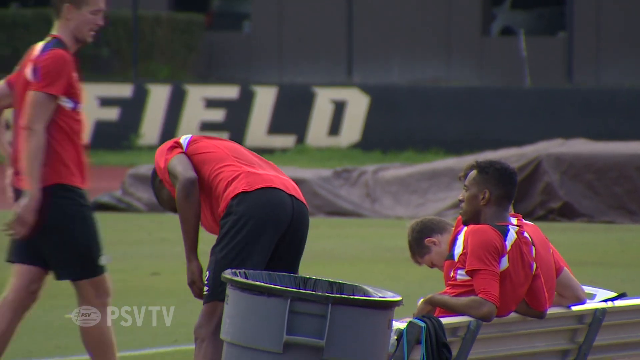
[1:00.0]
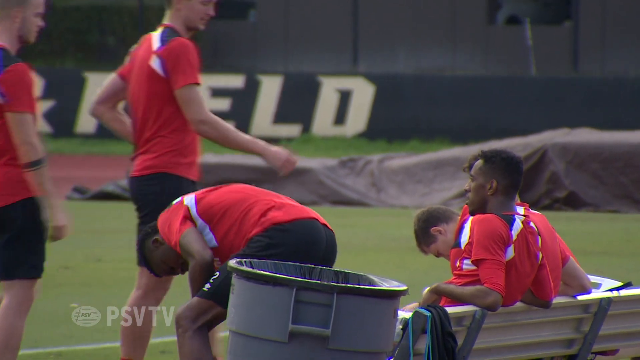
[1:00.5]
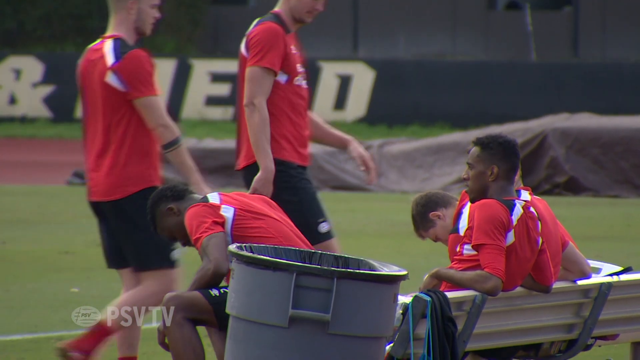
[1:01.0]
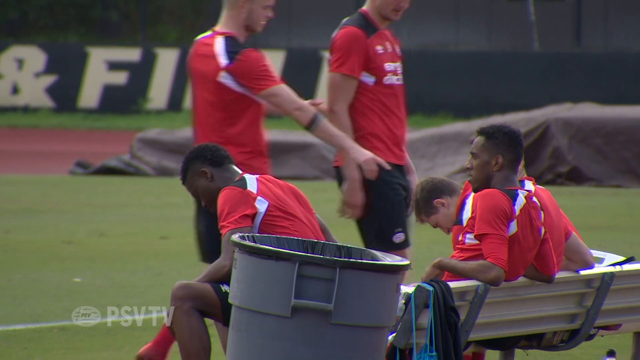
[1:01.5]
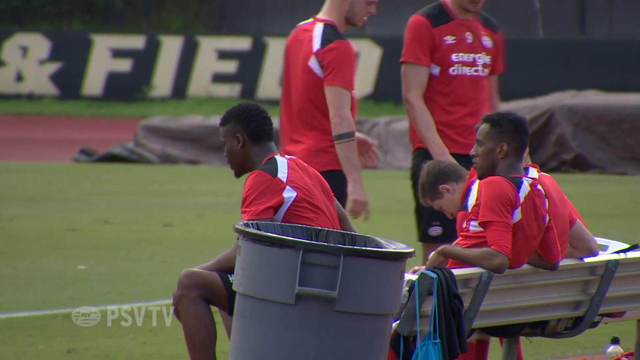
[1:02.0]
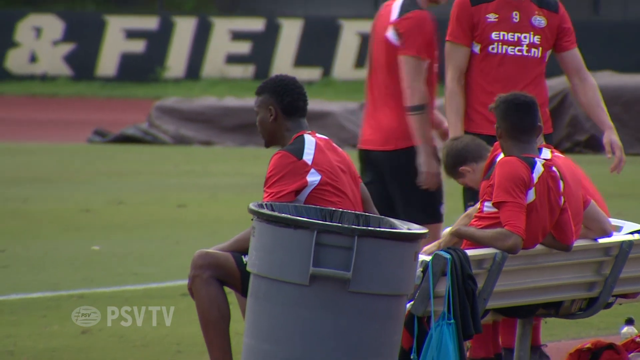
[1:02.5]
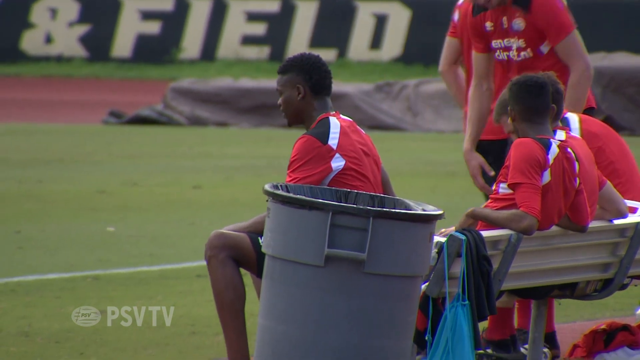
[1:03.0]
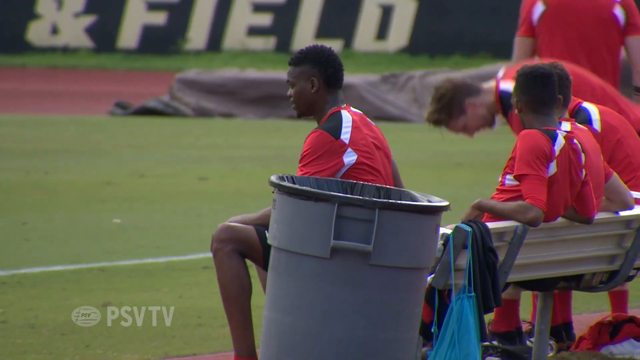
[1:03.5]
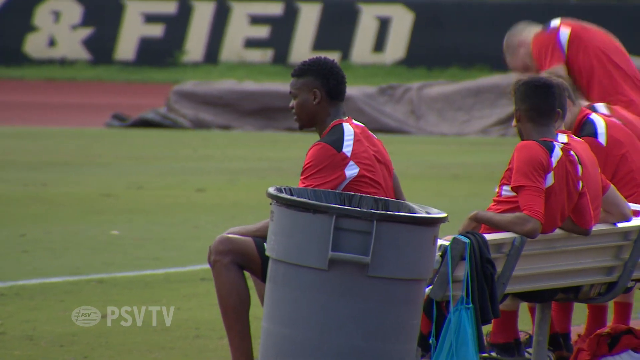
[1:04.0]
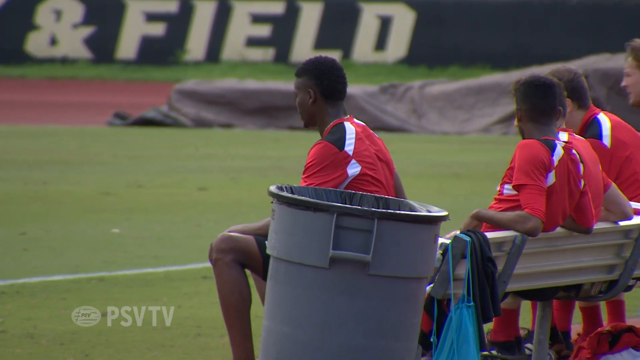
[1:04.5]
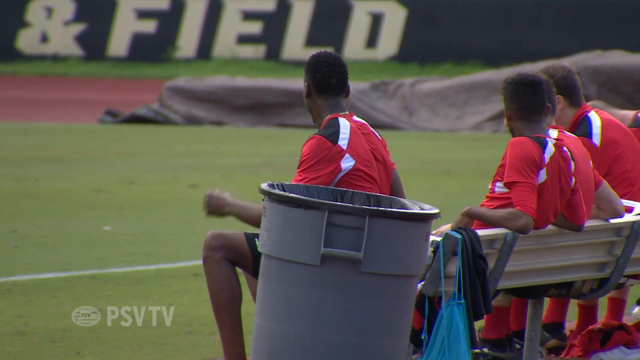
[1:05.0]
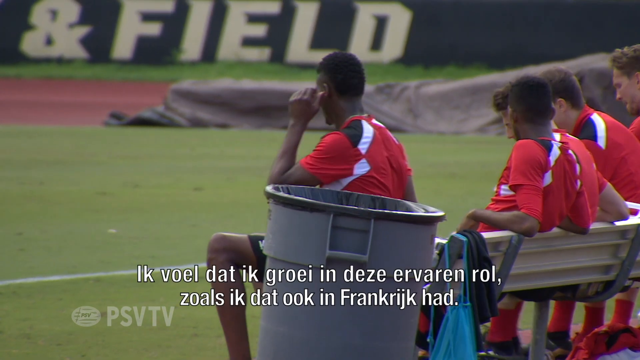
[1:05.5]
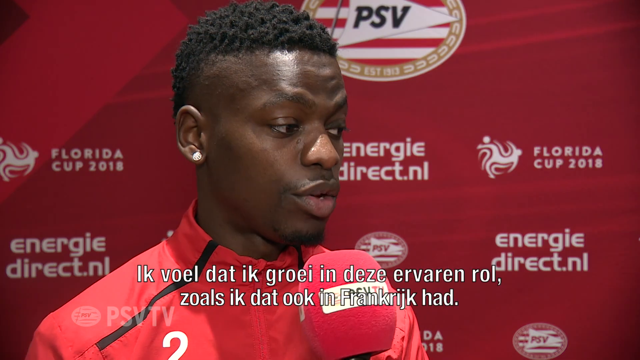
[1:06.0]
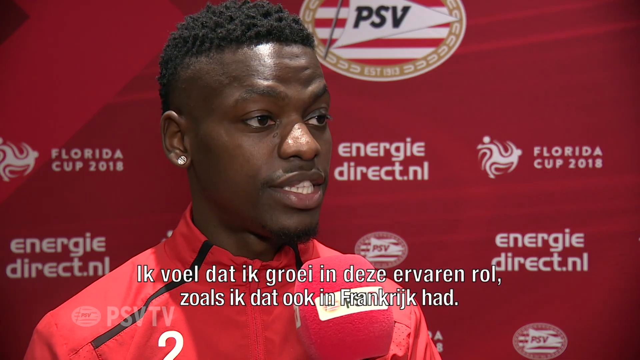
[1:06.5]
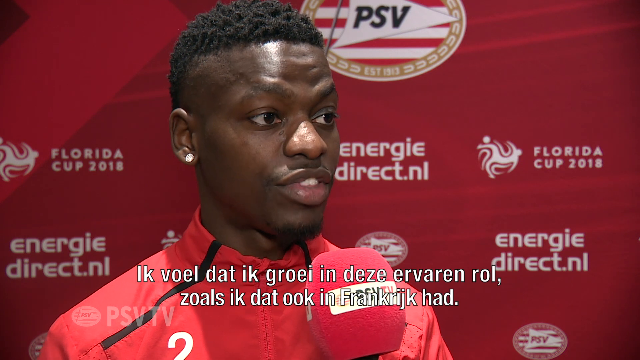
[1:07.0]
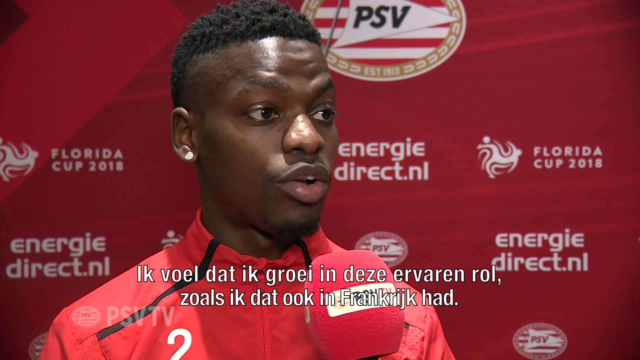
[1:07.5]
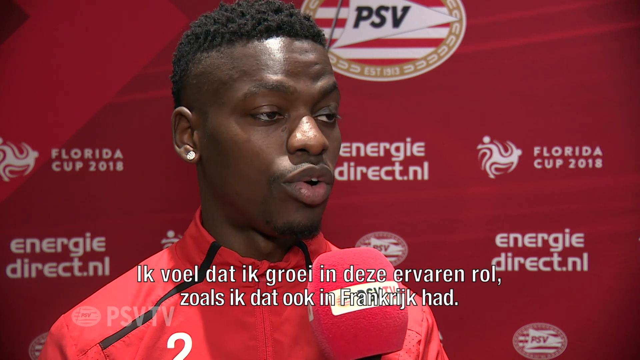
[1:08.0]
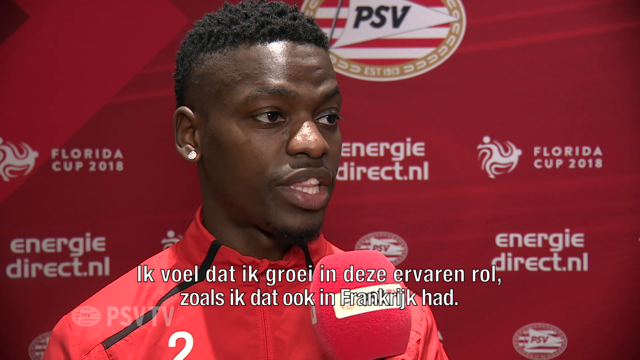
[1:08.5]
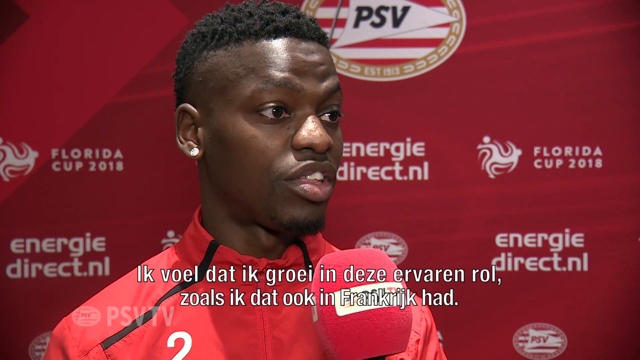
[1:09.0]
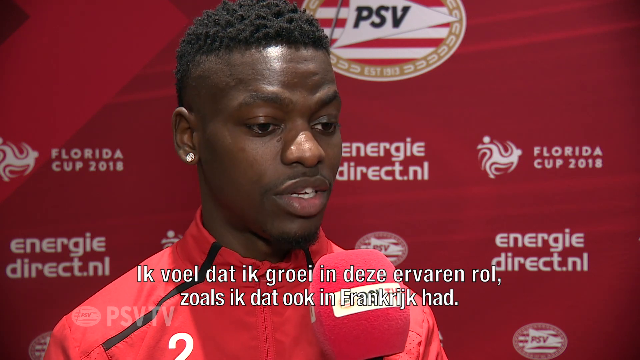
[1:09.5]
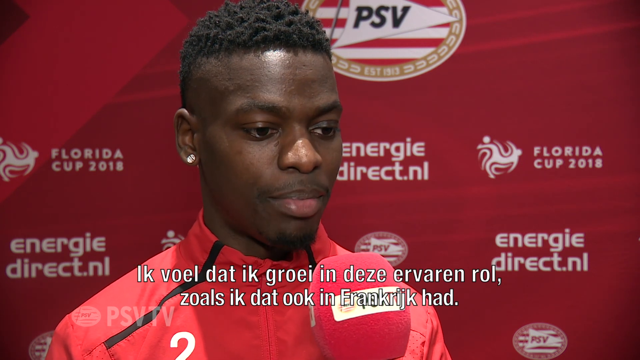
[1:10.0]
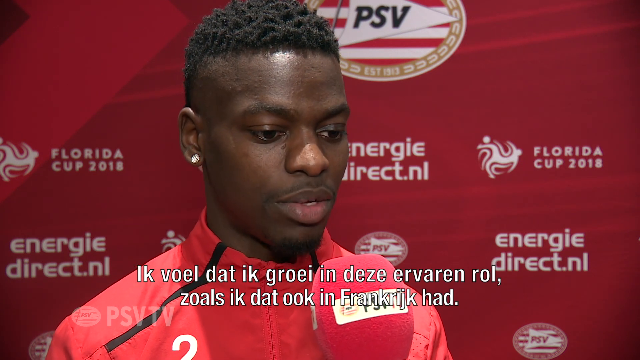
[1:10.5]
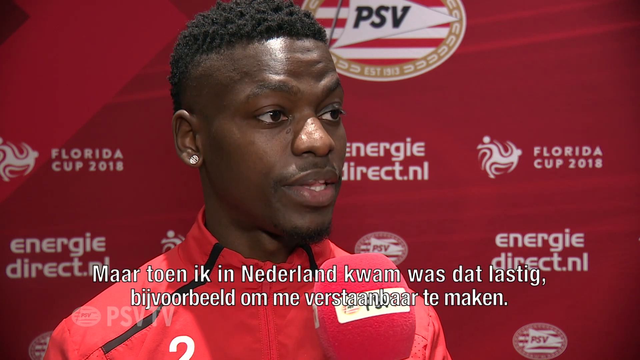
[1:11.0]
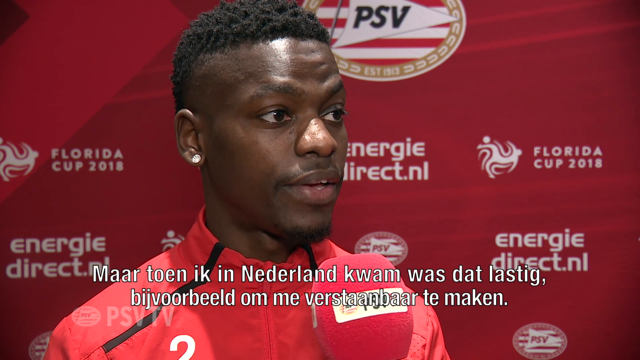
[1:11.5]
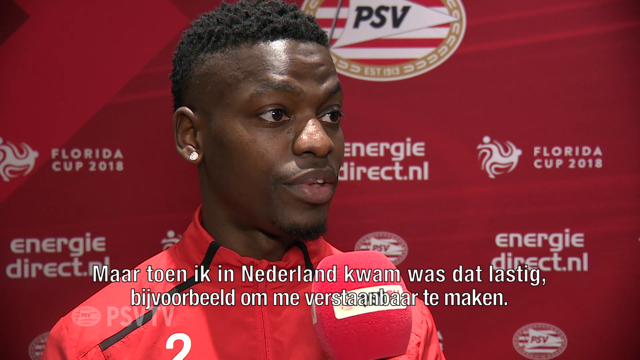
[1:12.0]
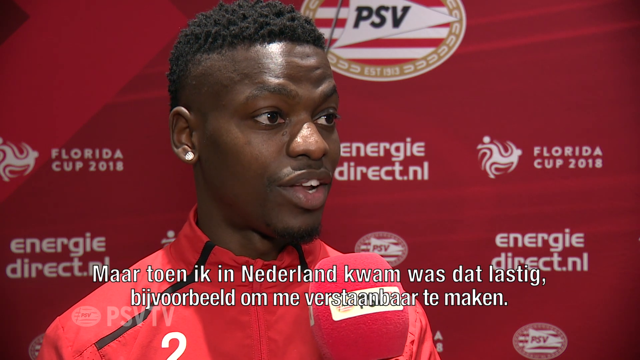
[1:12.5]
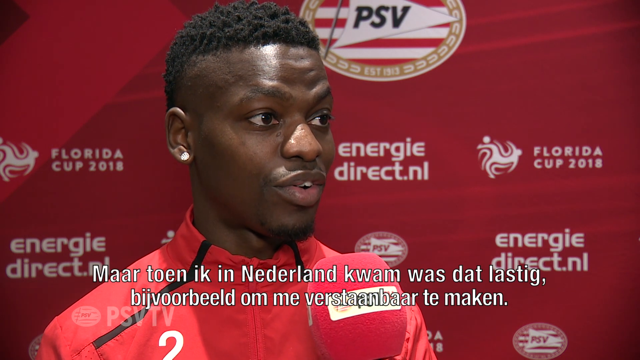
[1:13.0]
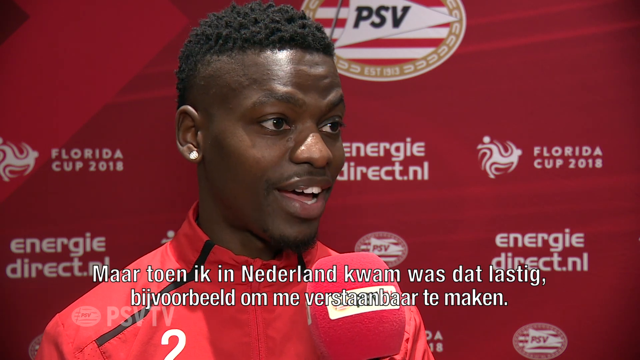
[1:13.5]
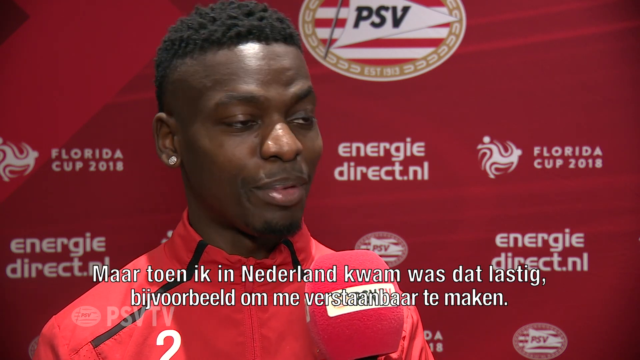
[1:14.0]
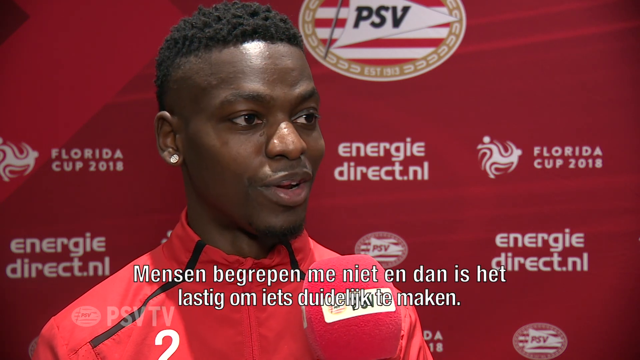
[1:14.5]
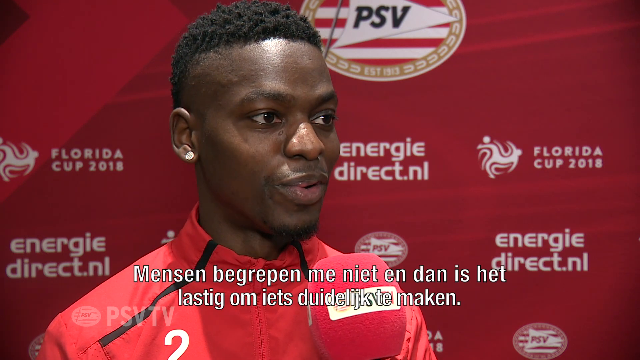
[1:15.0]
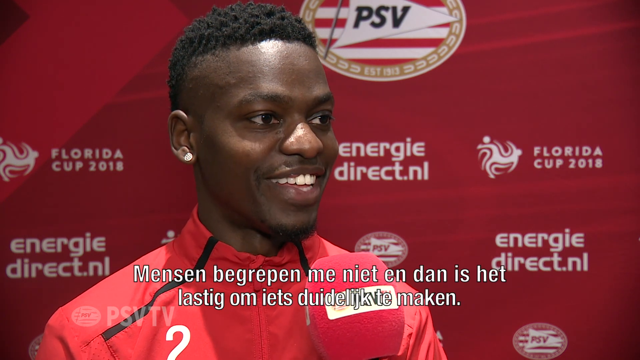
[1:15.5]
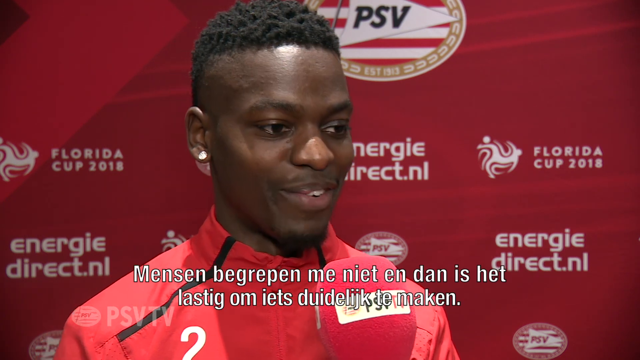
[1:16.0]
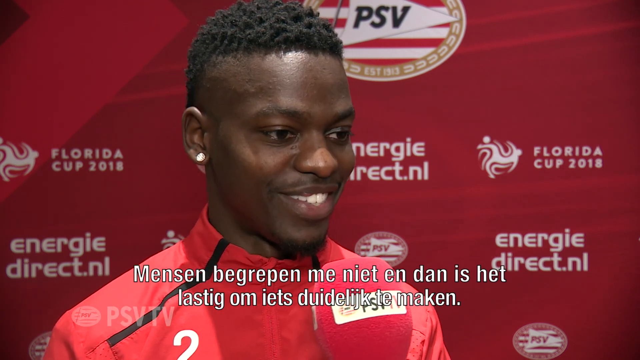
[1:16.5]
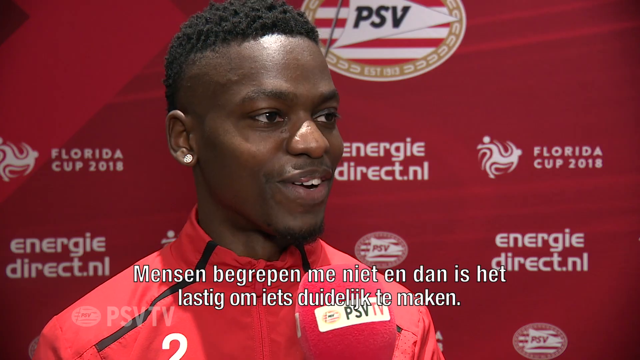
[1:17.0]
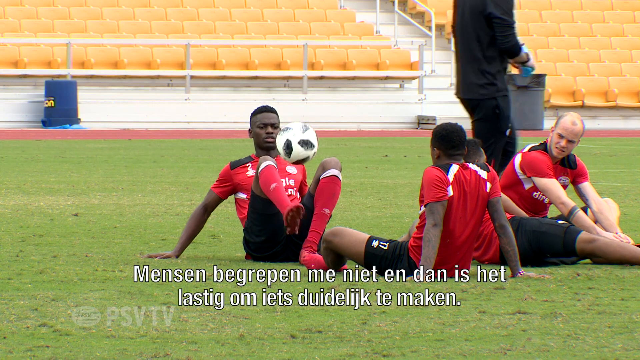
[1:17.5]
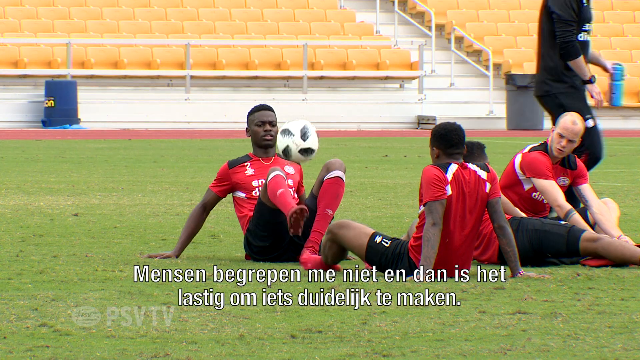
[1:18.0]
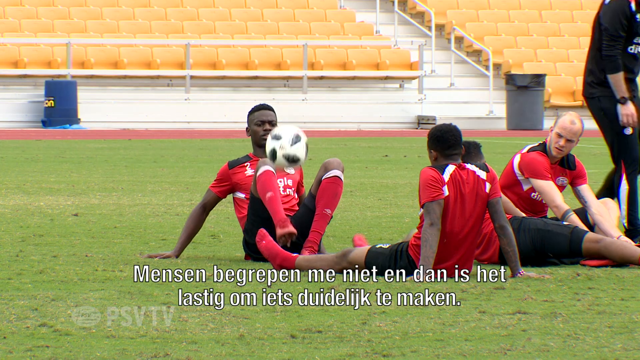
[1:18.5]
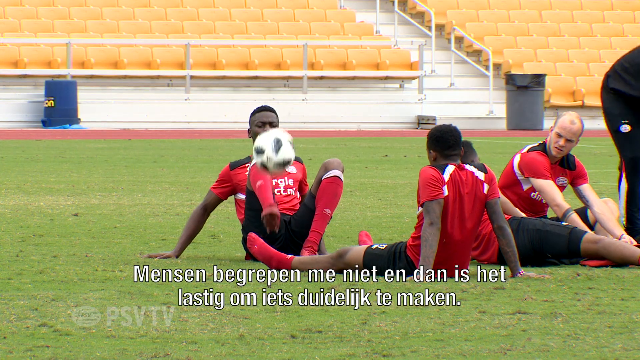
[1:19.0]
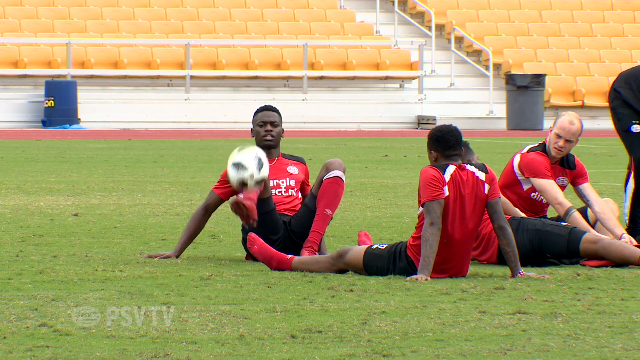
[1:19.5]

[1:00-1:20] A team of about four or five players sits on a bench taking a break, and one of the men, who is African-American with diamond studs in his ears, is interviewed. He bounces a soccer ball on his leg while sitting in a grassy field area; behind them a sign says "track and field", and there are a few trash cans with trash bags in them. A couple of the players are African-American and a couple are Caucasian, but they all wear about the same jersey, so they are probably teammates, and the sport looks like soccer. They wear red socks, and one has taken his shoes off to rest in the grass while kicking the soccer ball up and down.